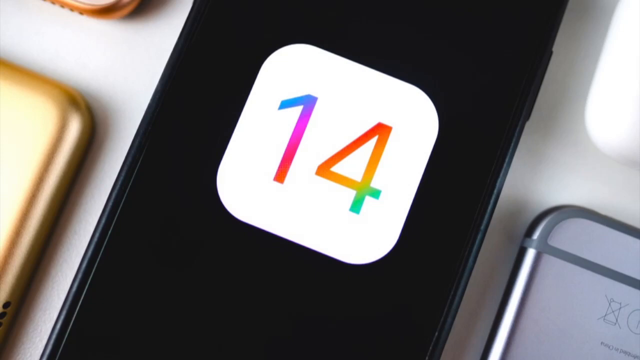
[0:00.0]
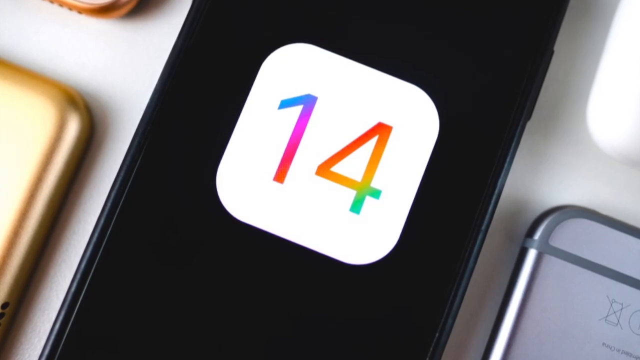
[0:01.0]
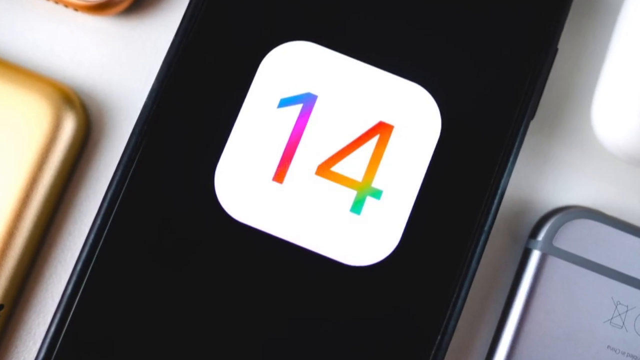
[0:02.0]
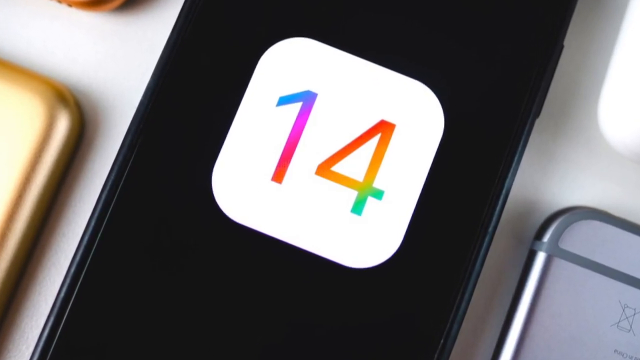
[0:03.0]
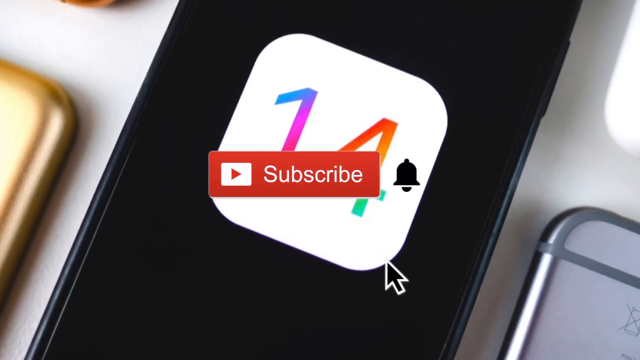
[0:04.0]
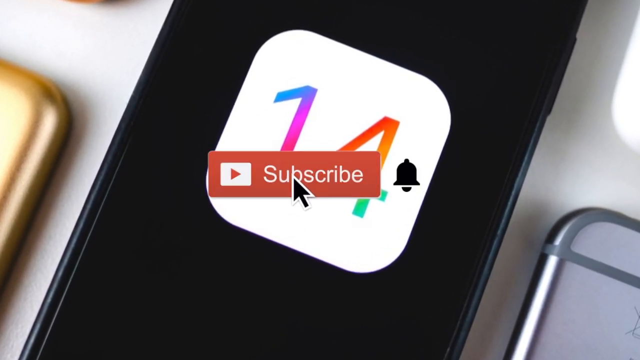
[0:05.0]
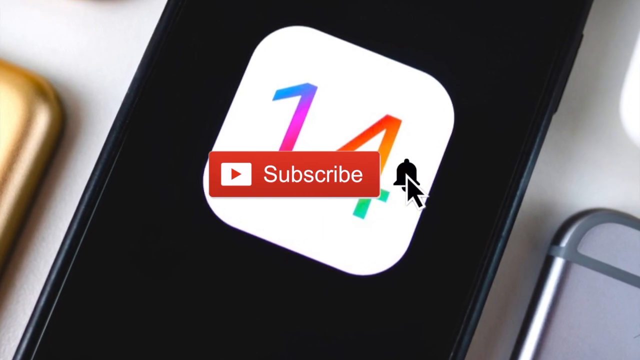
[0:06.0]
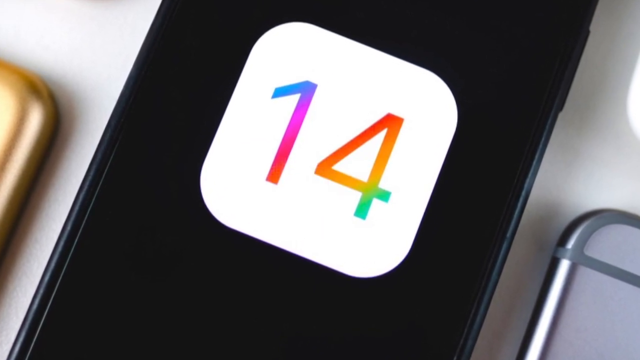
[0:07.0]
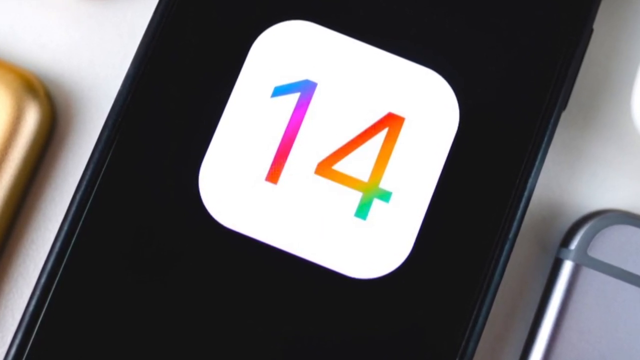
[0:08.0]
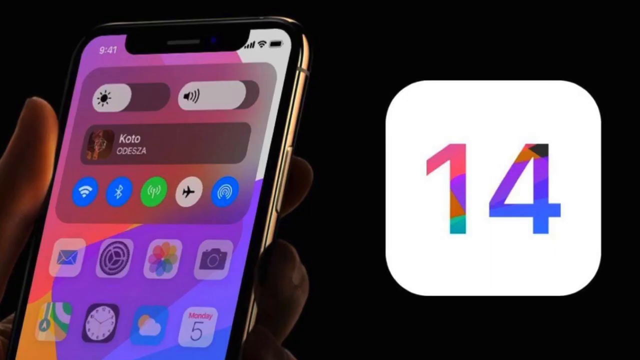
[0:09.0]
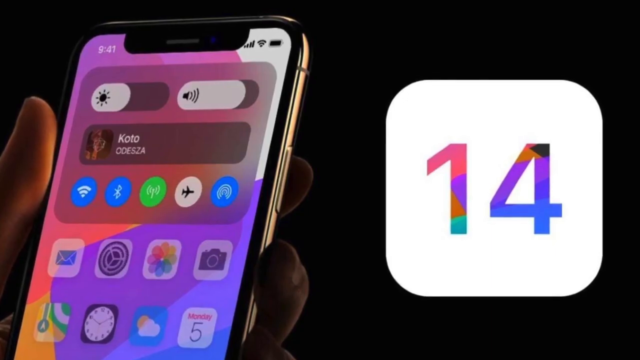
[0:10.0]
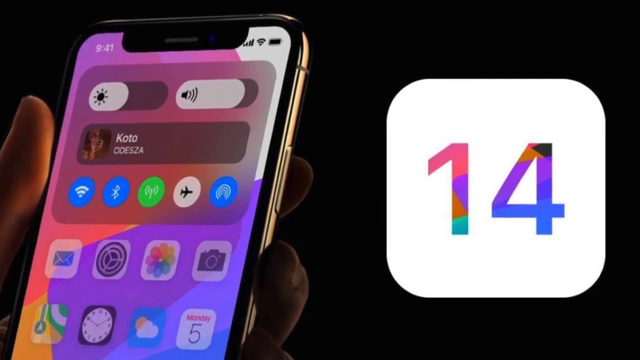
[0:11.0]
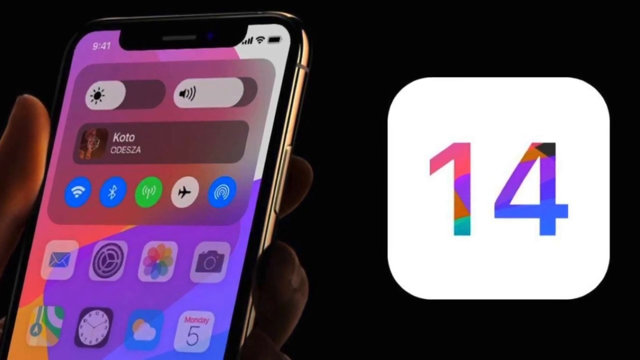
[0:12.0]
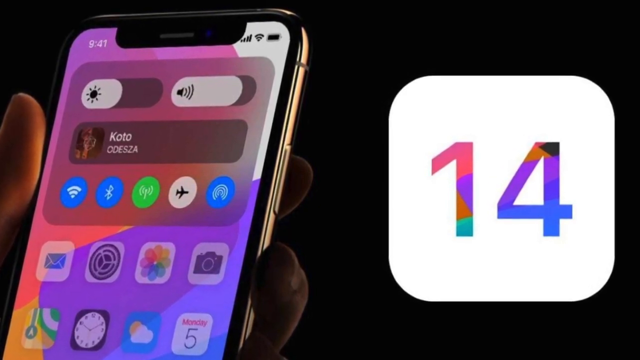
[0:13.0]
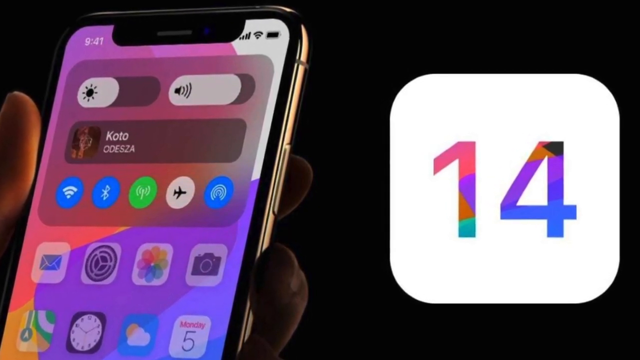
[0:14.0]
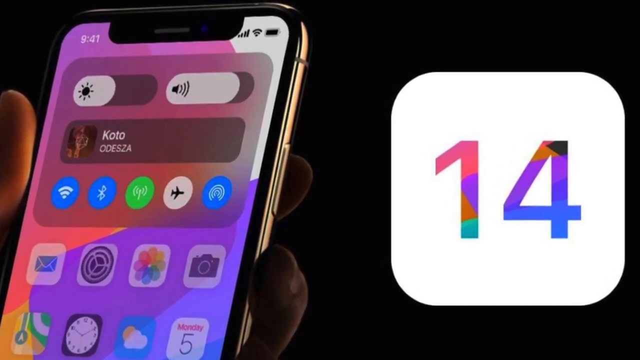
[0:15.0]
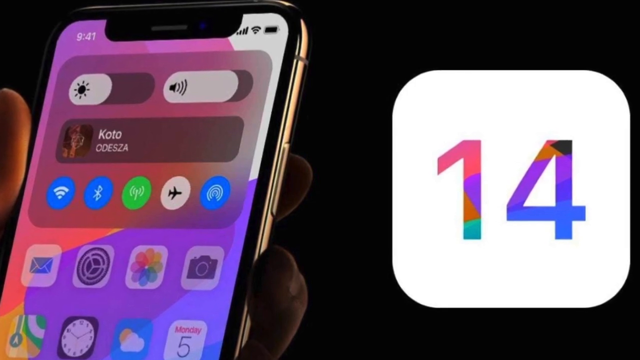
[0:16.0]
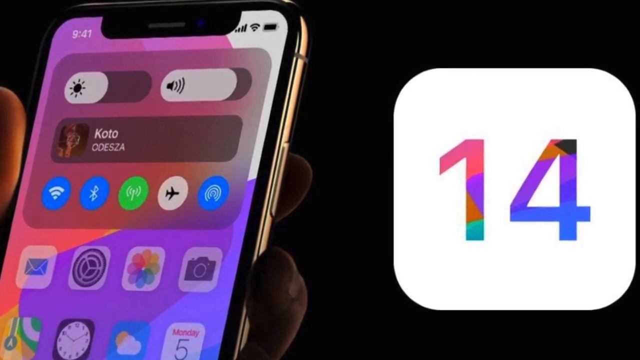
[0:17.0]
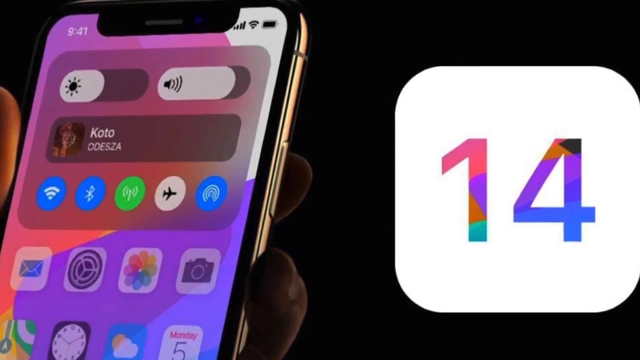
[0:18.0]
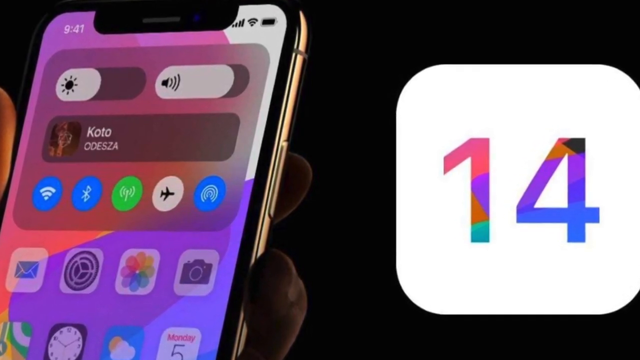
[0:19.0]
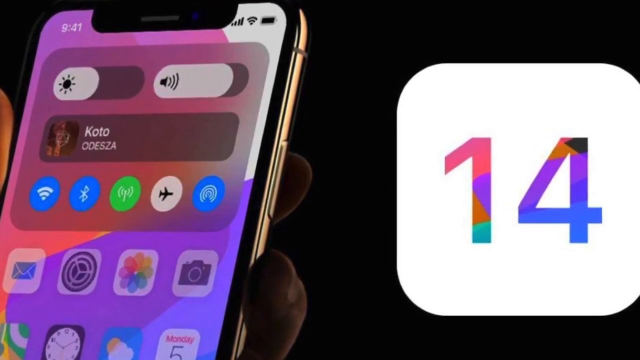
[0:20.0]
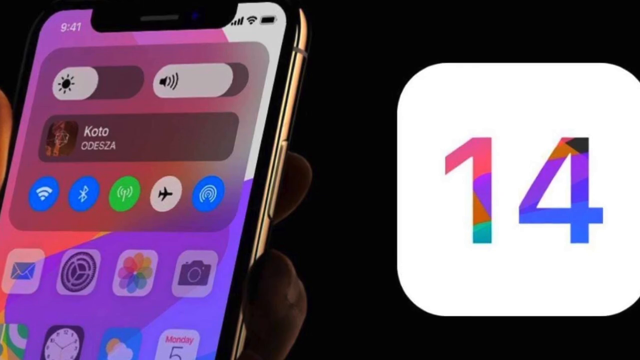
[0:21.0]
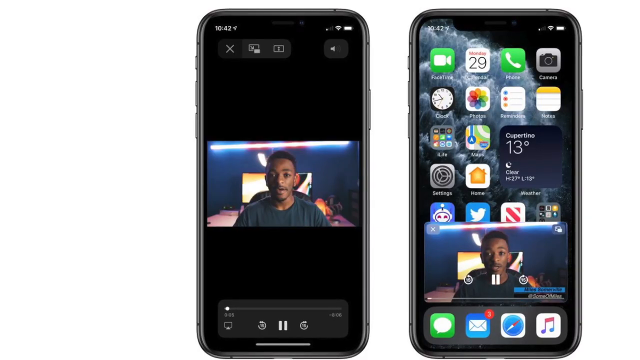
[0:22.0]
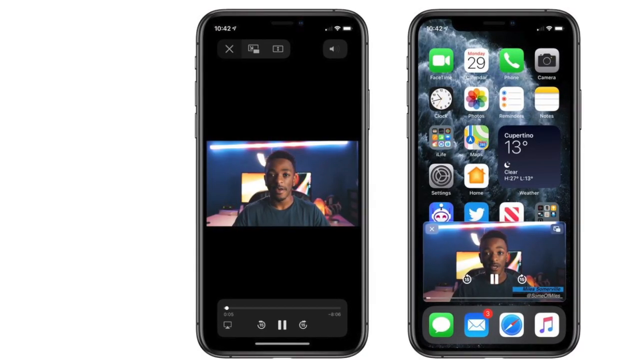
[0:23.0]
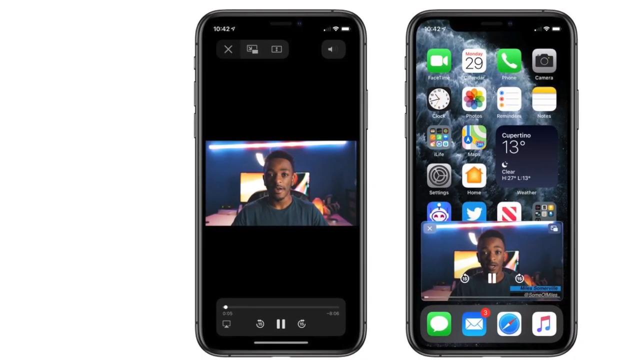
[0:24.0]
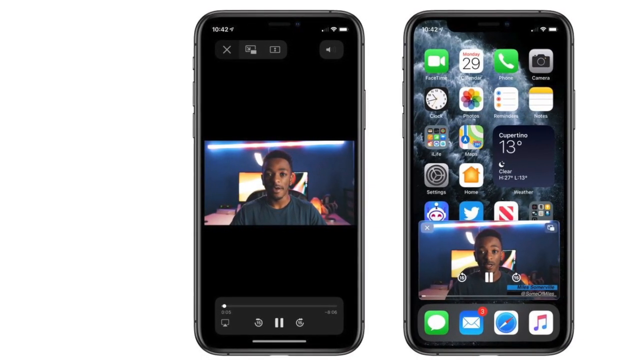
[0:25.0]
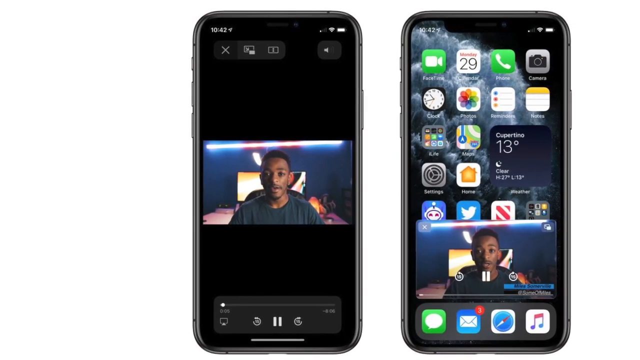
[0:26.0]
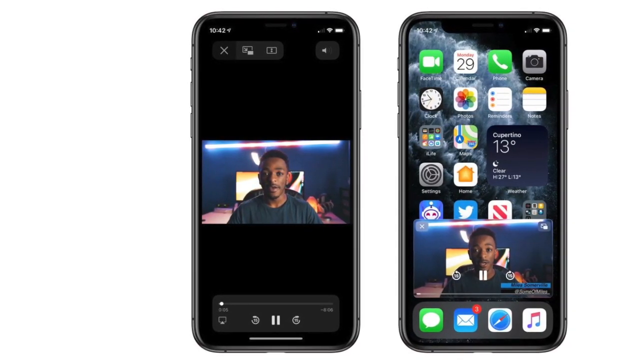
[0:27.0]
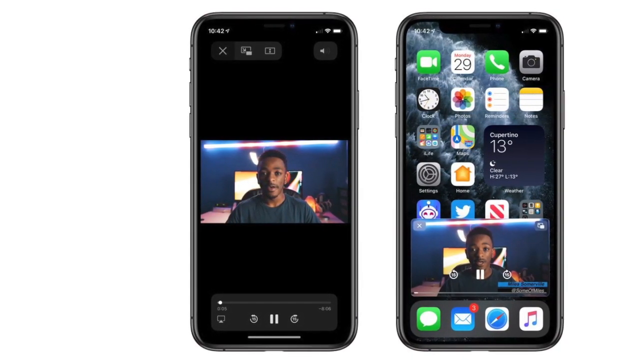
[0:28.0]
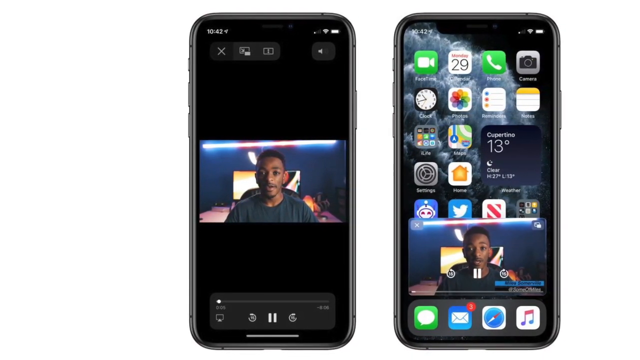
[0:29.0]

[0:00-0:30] A black iPhone is in the center of the screen, with the corners of iPhones in other colors around it. In the center of this iPhone is a big white square with the number 14 on it, the number filled with a colorful rainbow gradient. A subscribe button with a little notification bell pops up in the center of the screen, and a mouse comes in and clicks the subscribe button and the notification bell. It then disappears, and the camera continues to zoom in on the 14 very slowly. The video cuts to a black background with someone's left hand holding an iPhone, the top half of which is visible; on the right side of the screen the 14 in the white square is still visible. The camera slowly zooms into this, then the video switches to a white background with two iPhones. The left iPhone has a horizontal video open while the phone is upright, so there are black bars at the top and bottom; a man in the center faces the camera, but it is a still image, so he is not talking yet. The right iPhone shows the iPhone home page with the same video in a windowed version at the bottom of the screen. The camera pans slightly backwards to the right.